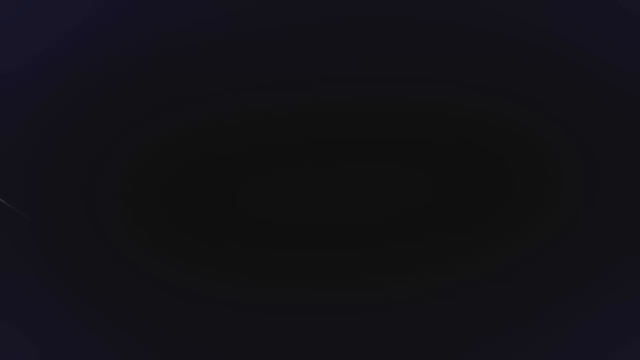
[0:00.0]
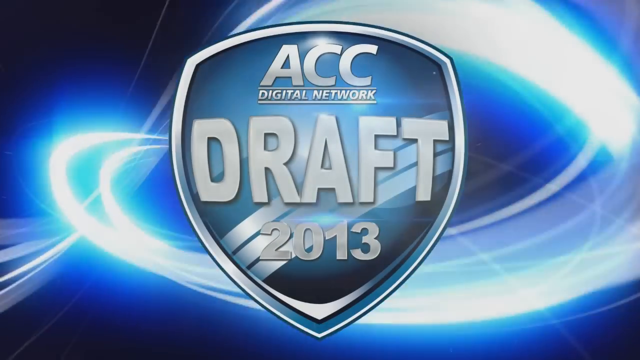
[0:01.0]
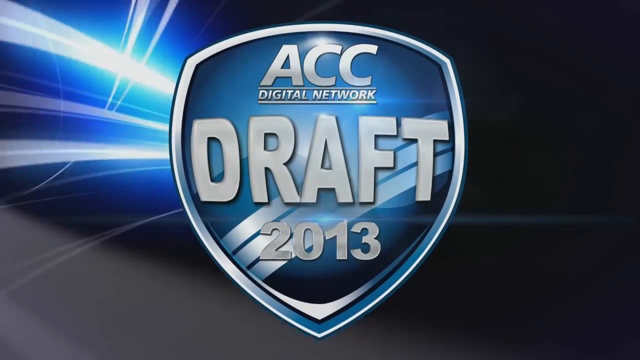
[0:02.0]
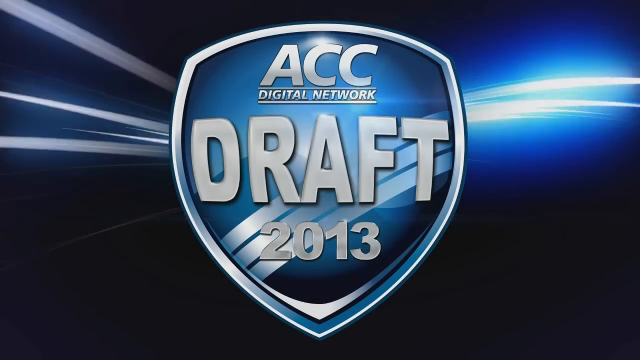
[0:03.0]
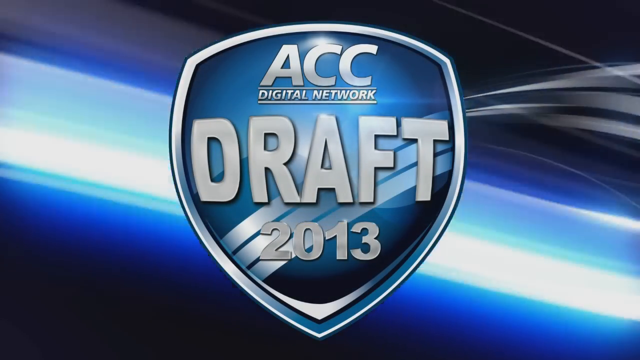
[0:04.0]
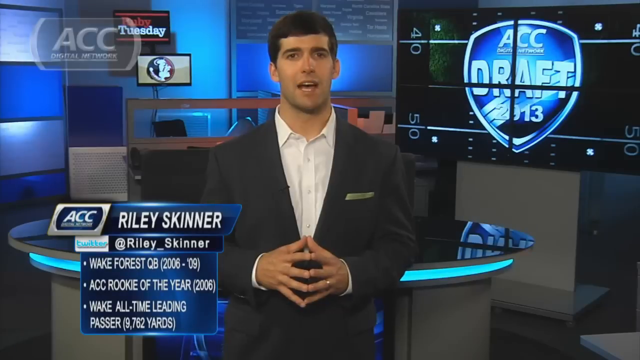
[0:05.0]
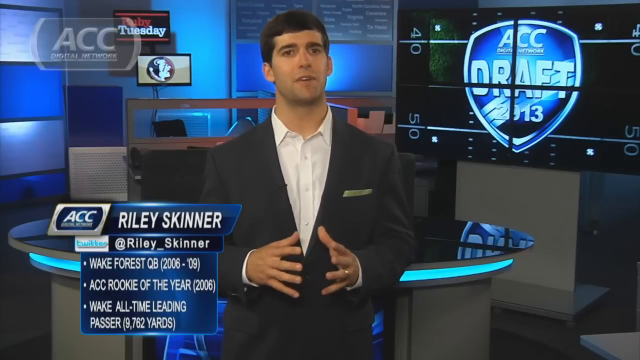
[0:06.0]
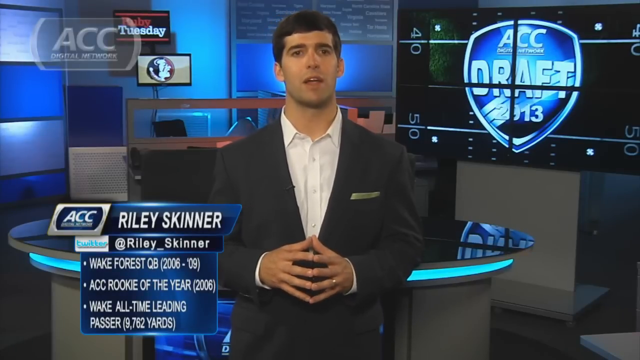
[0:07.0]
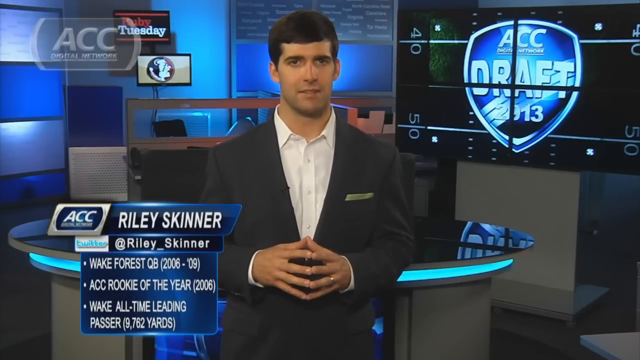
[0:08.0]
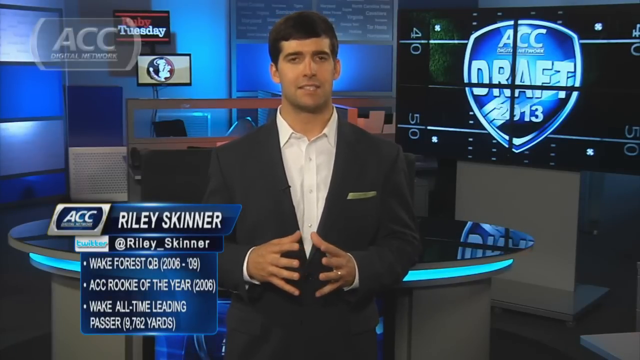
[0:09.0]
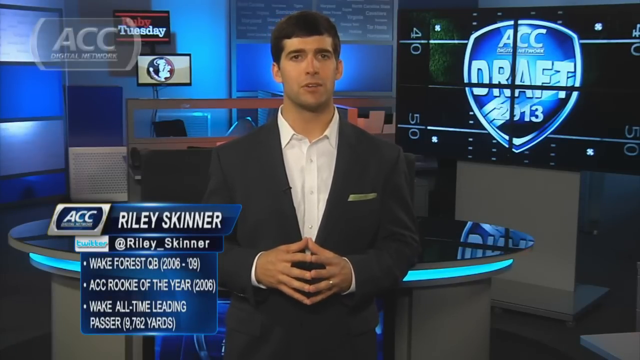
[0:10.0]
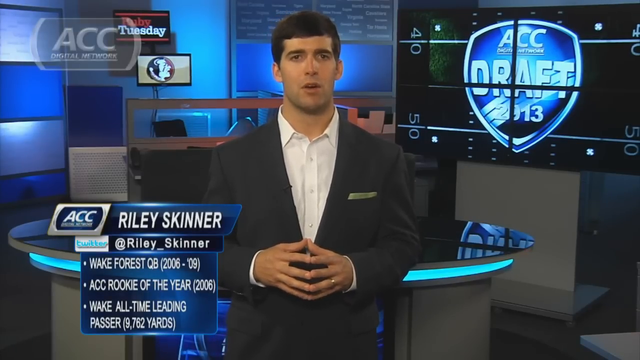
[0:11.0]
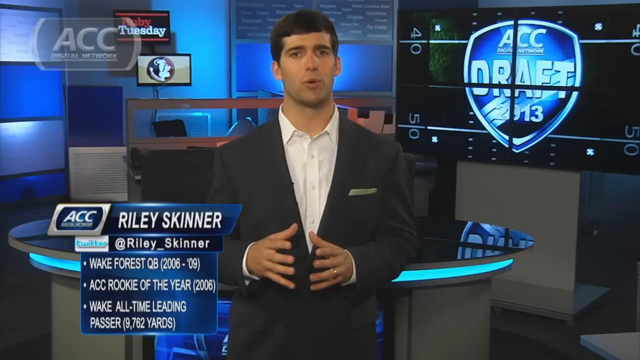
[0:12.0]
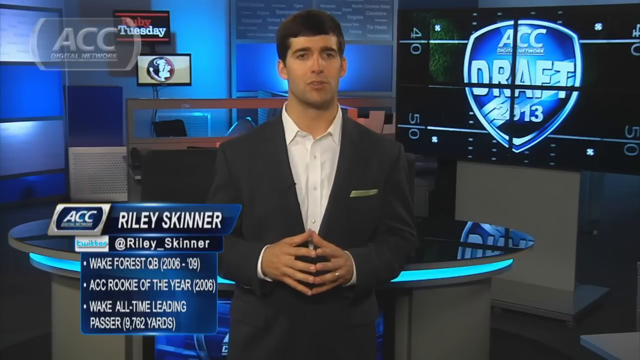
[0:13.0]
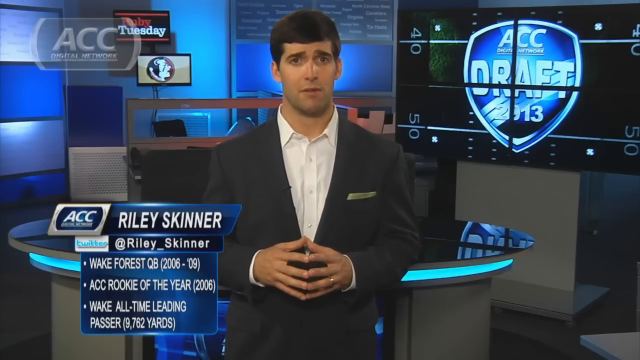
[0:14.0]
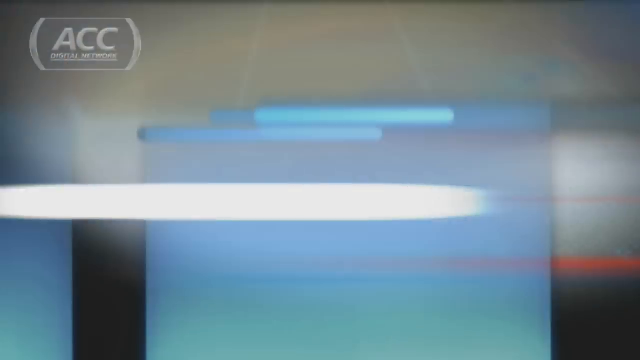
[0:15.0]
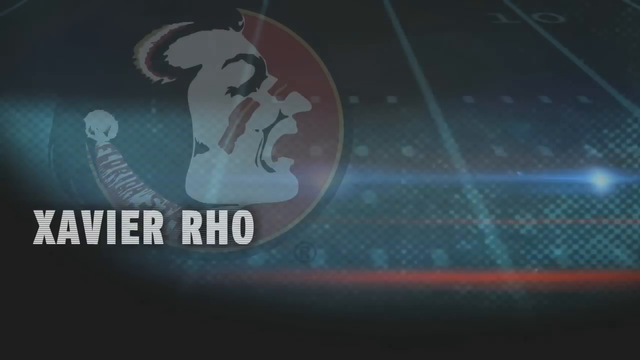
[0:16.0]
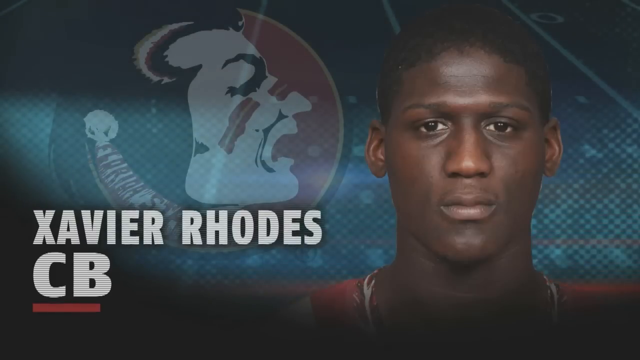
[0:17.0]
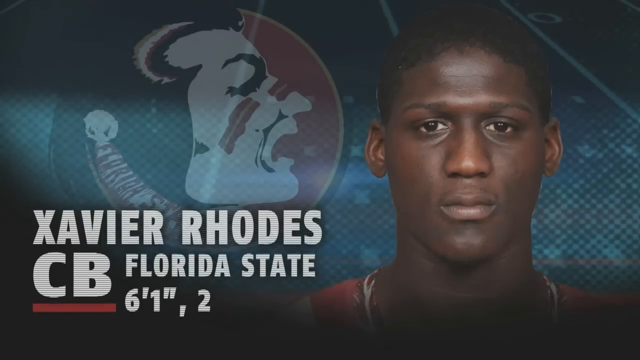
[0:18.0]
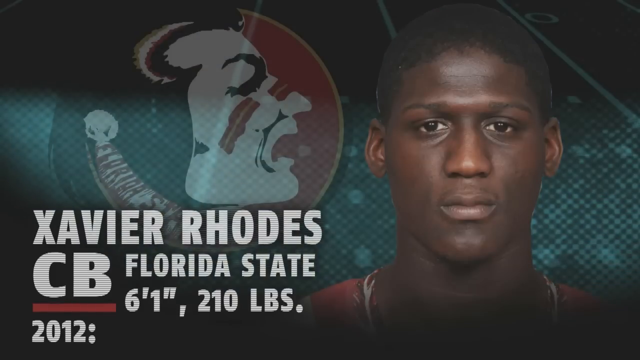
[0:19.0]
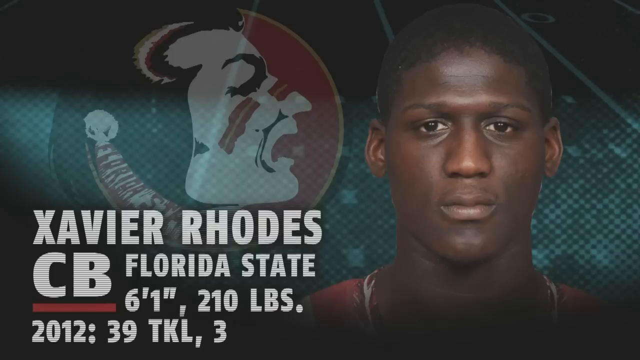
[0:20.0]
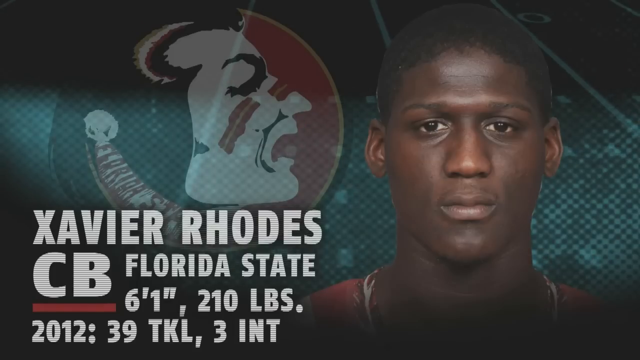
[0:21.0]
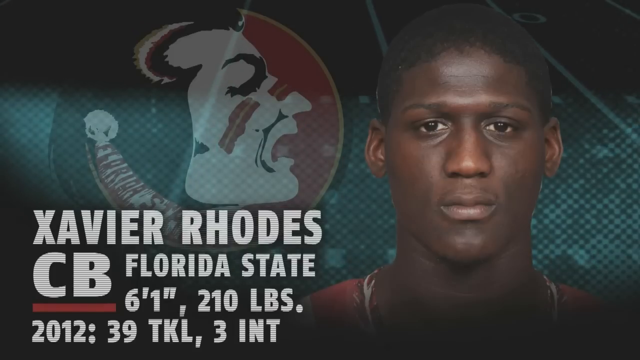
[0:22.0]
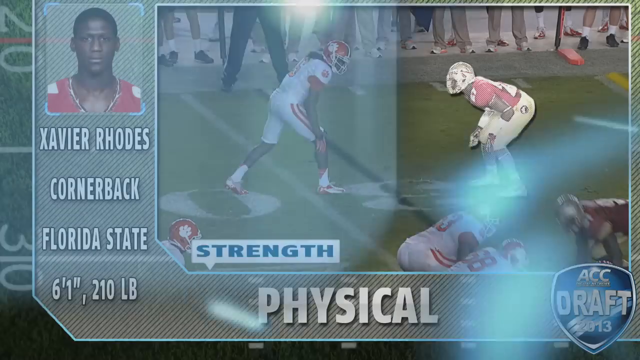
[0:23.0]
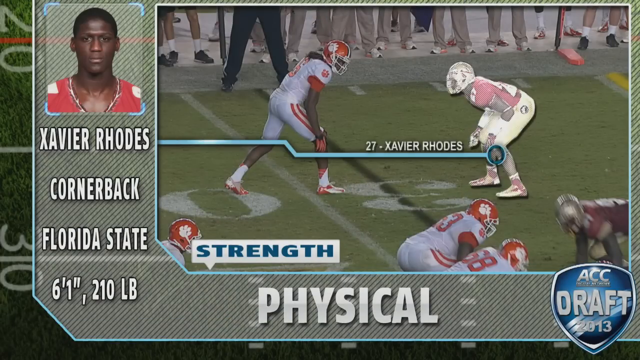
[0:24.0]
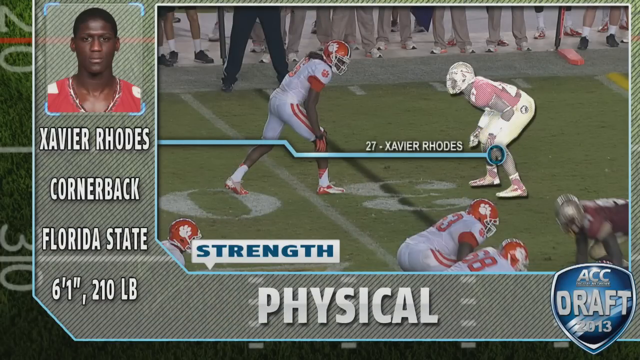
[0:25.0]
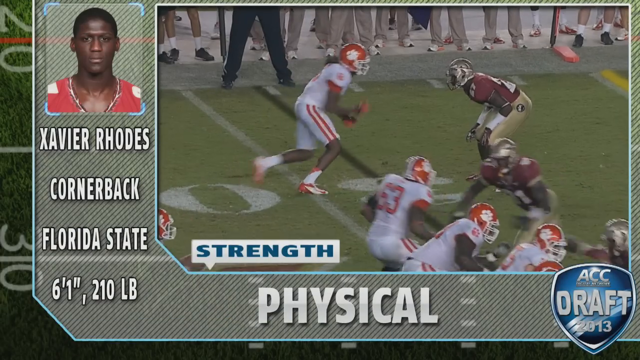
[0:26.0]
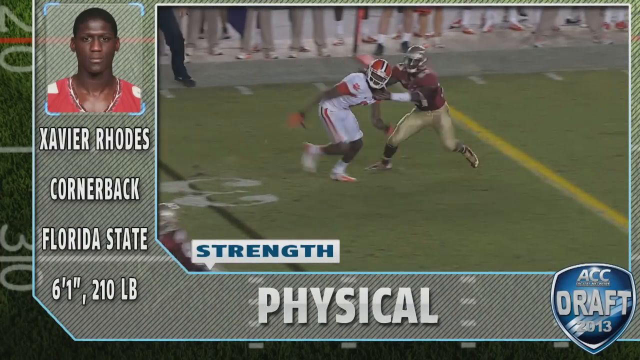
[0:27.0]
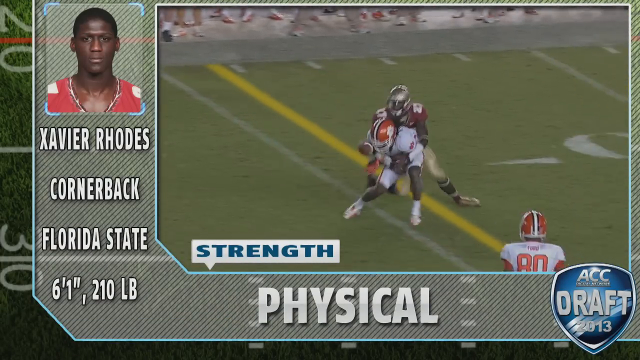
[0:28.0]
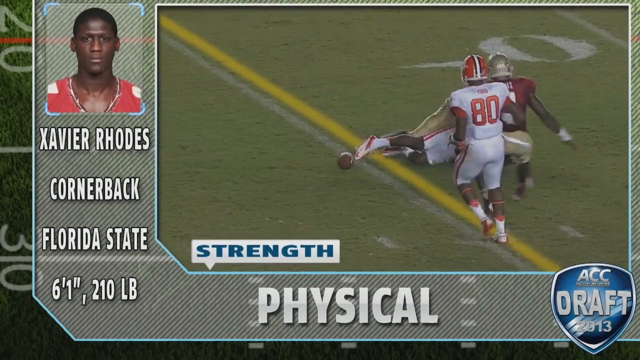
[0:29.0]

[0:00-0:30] On-screen text reads "ACC Digital Network" and "Draft 2018", along with "Riley Skinner, Lake Forest, QB 2006-09". The video then shows a player, Xavier Rose, a cornerback (CB) from Florida State, listed at 6'1". Footage shows players on the field tackling and fighting for the ball.